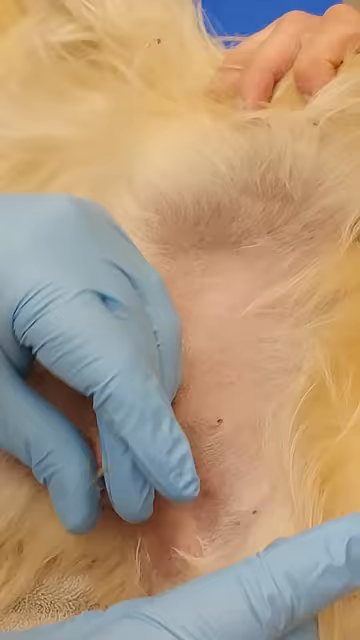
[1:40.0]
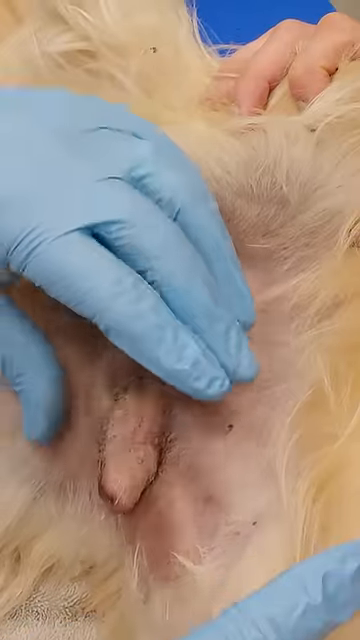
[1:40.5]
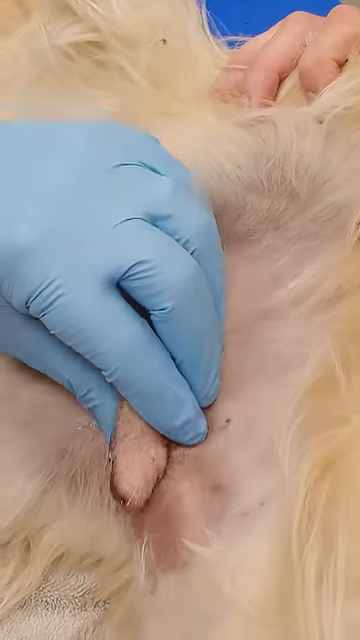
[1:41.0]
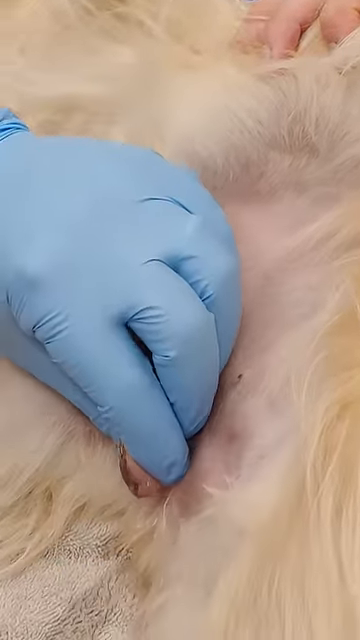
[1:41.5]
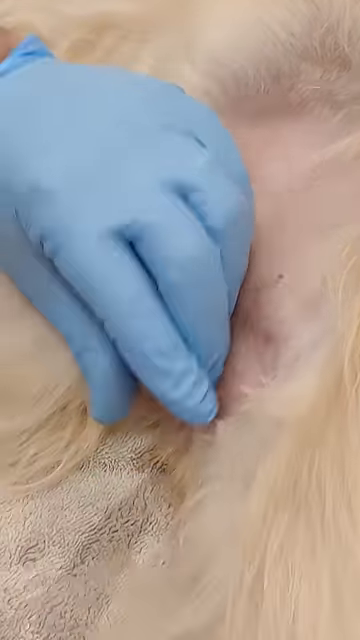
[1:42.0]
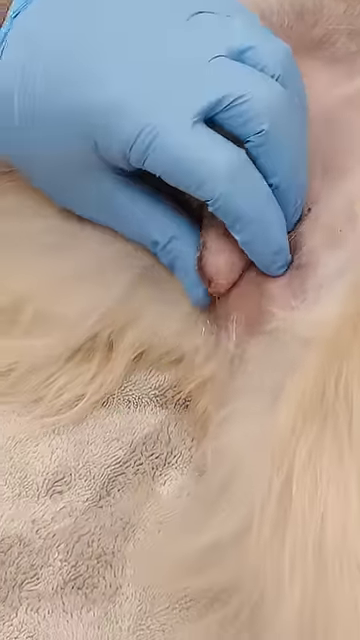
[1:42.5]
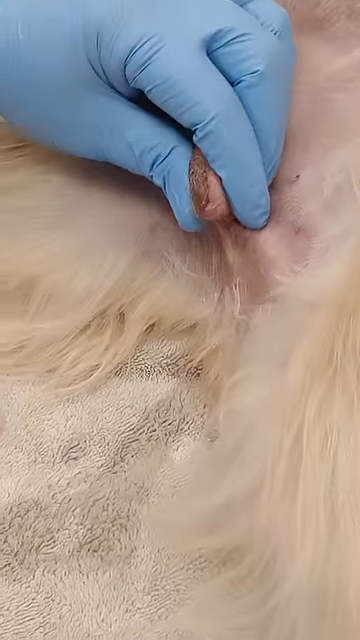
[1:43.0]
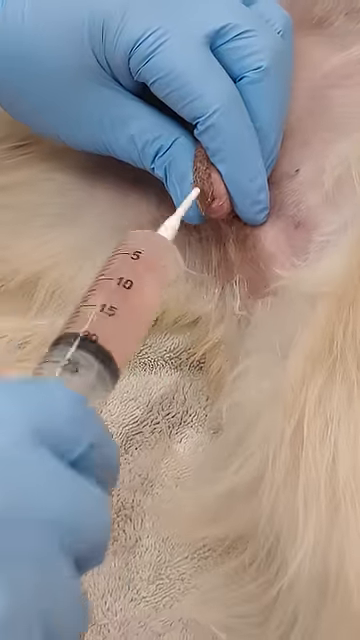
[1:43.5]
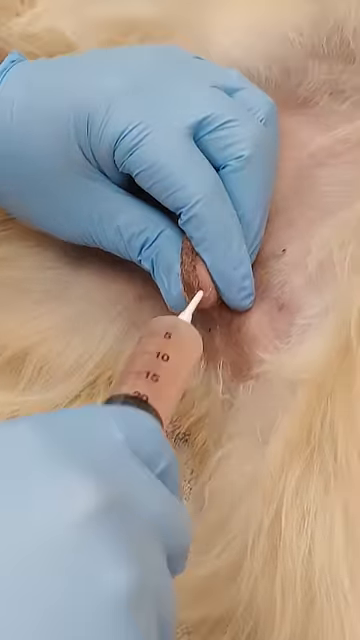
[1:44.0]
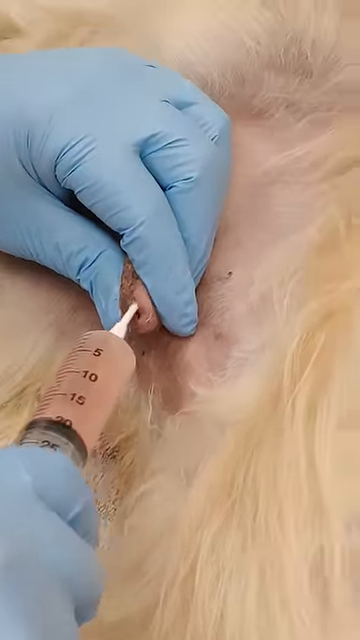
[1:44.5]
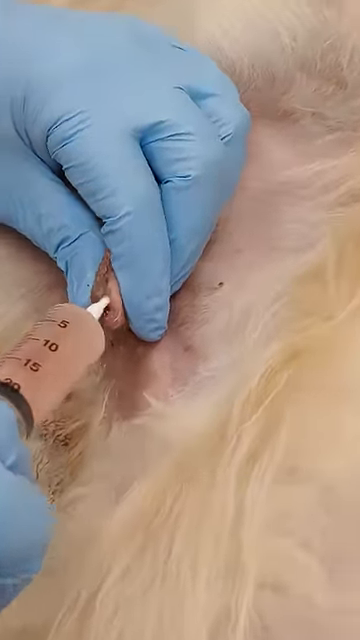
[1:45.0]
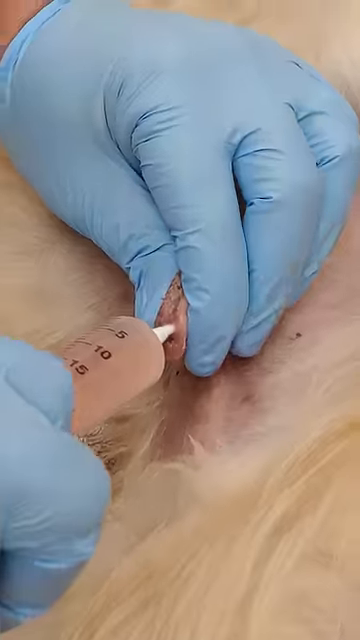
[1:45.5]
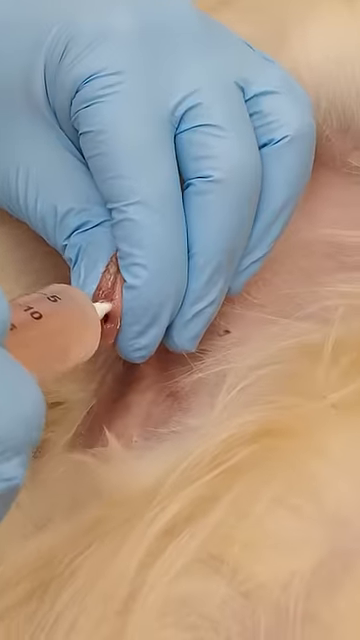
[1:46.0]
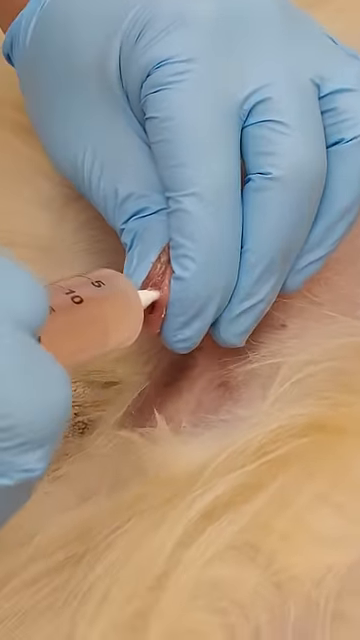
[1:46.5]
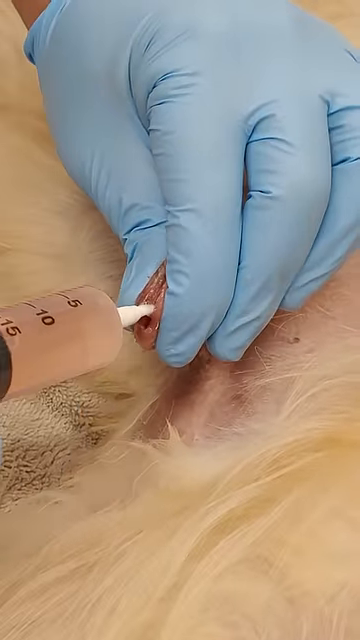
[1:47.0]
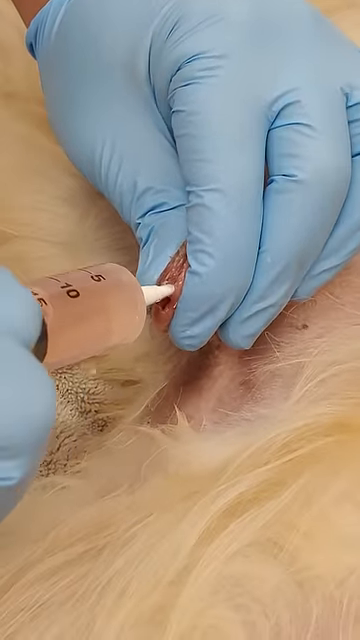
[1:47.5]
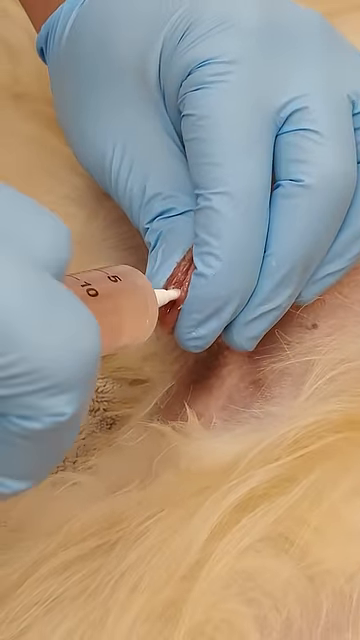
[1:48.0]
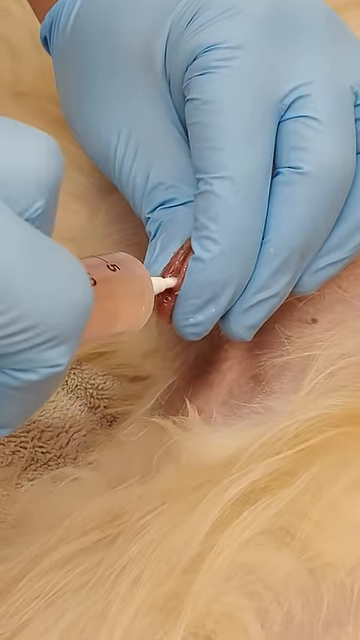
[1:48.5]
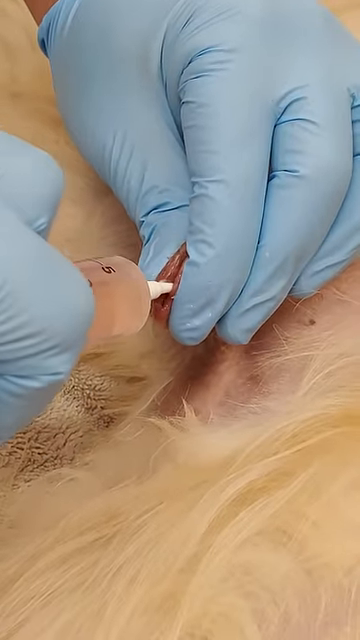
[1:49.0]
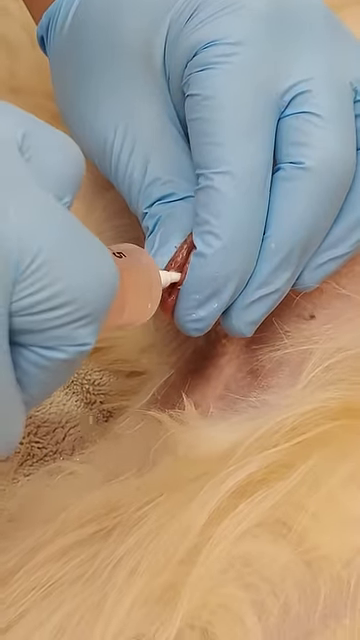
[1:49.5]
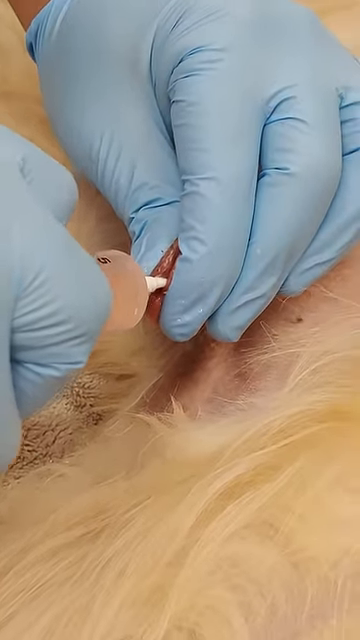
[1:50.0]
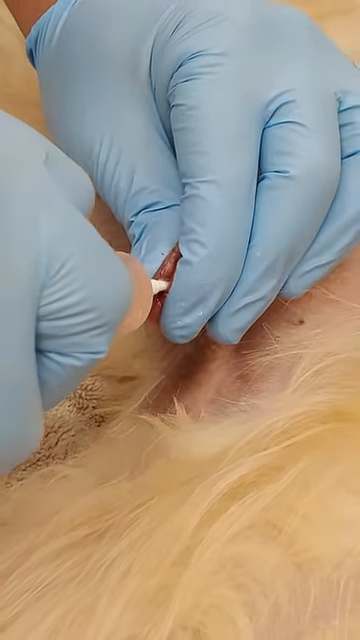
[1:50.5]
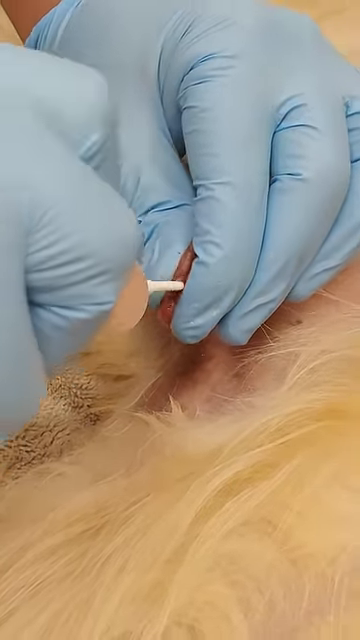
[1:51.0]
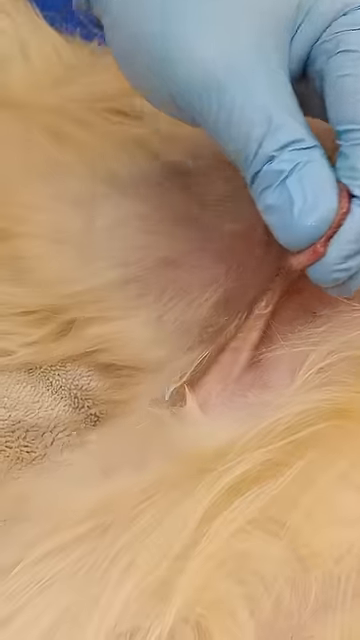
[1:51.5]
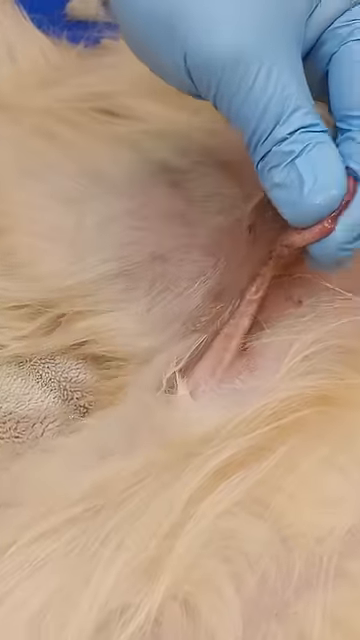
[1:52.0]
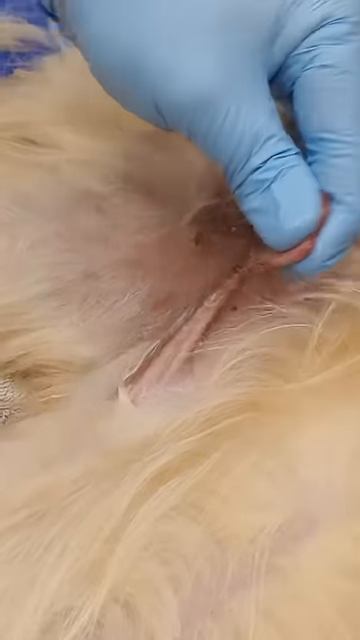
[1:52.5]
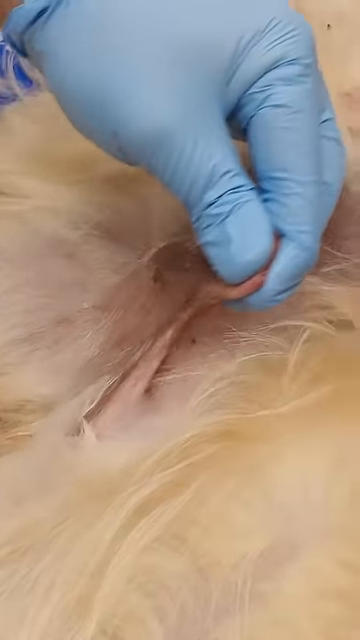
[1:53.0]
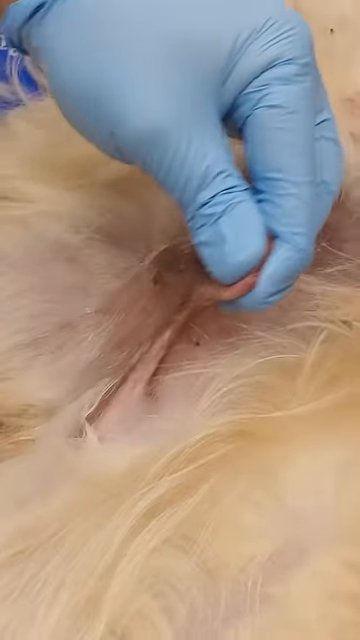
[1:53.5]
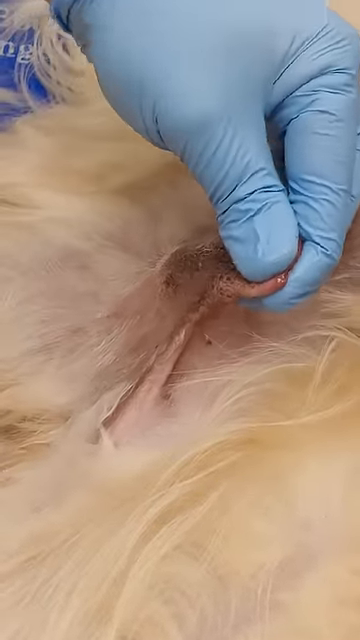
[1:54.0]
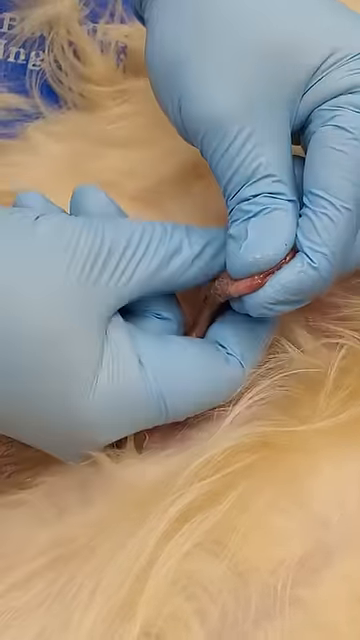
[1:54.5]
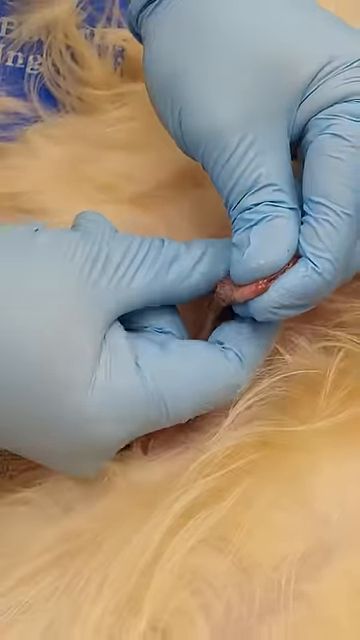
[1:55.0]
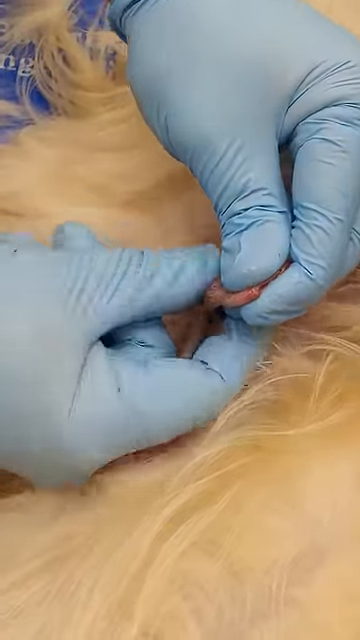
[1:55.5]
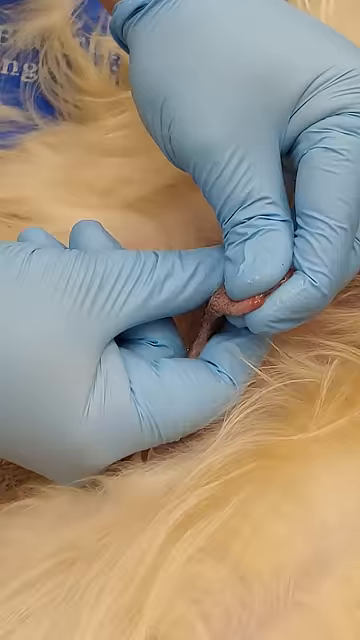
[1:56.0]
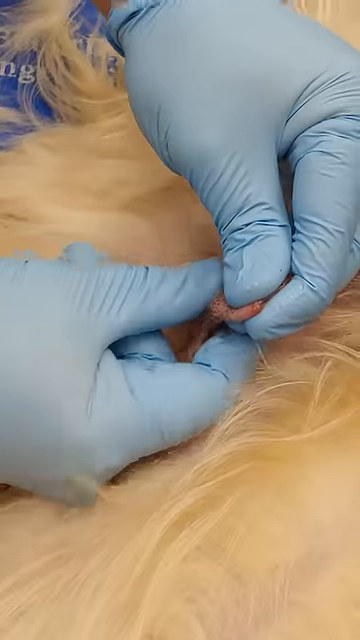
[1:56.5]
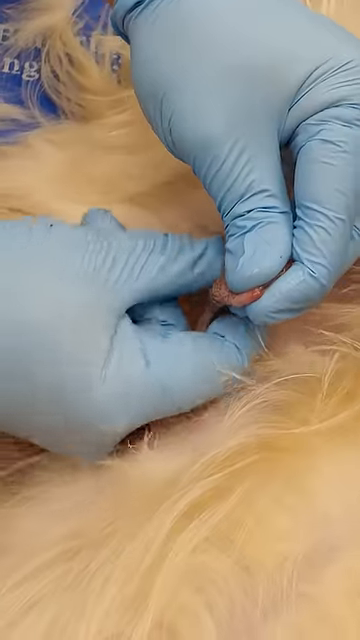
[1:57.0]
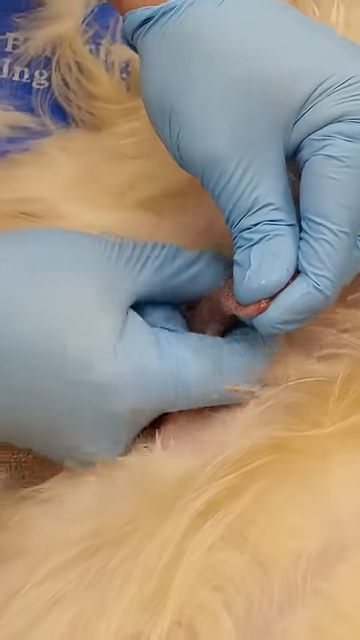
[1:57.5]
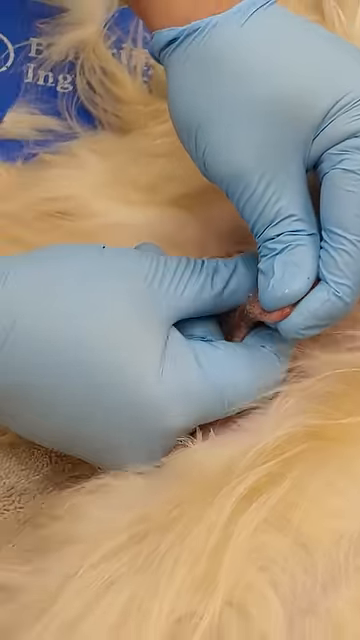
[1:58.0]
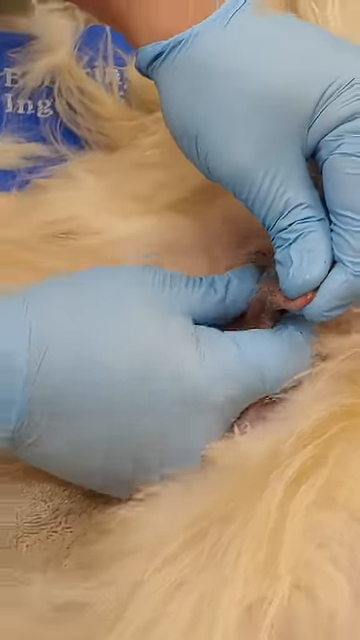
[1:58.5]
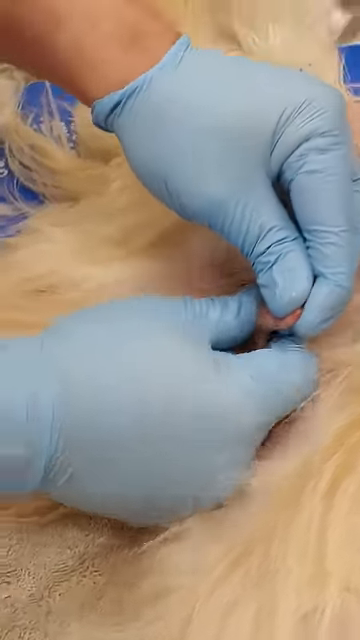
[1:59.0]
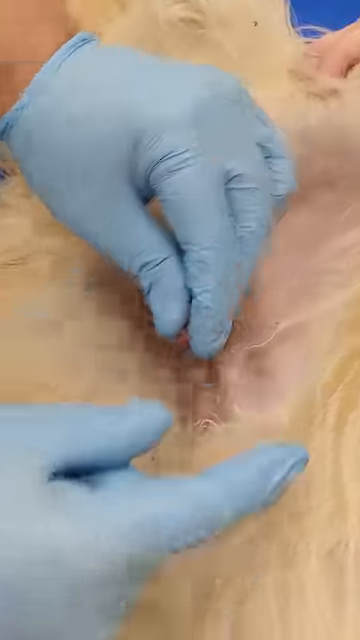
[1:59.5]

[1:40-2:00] A procedure is being done on an animal that looks like a dog. The vet squirts a fluid into the tip of the penis, then kind of shakes the penis around to help the liquid go down the urethra, and kind of rubs the penis downward. An assistant helps by kind of holding the dog's fur back out of the way. The woman's hands look feminine and she is not wearing rubber gloves, while the vet wears blue rubber gloves.